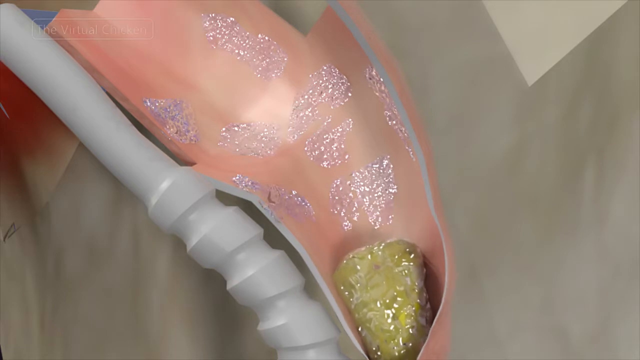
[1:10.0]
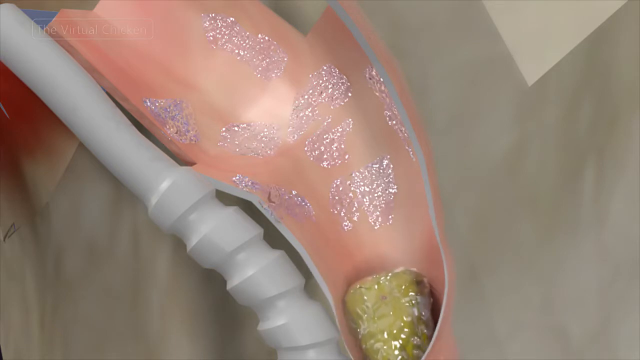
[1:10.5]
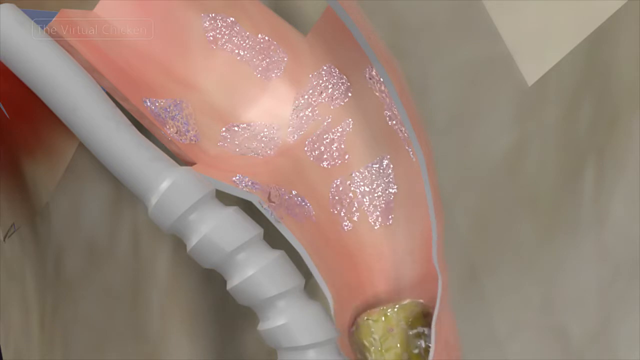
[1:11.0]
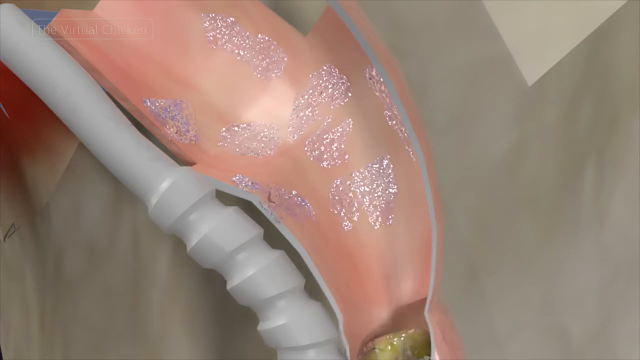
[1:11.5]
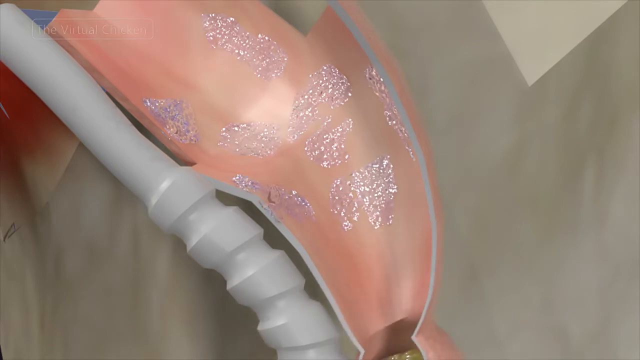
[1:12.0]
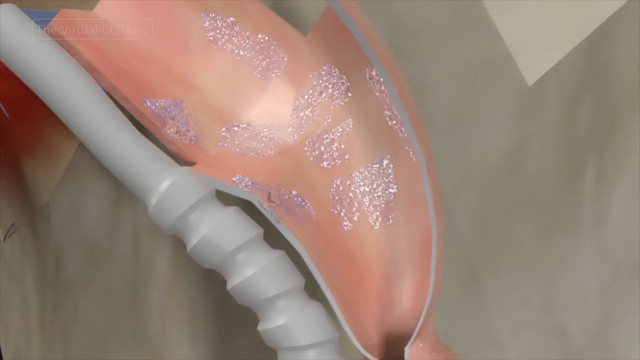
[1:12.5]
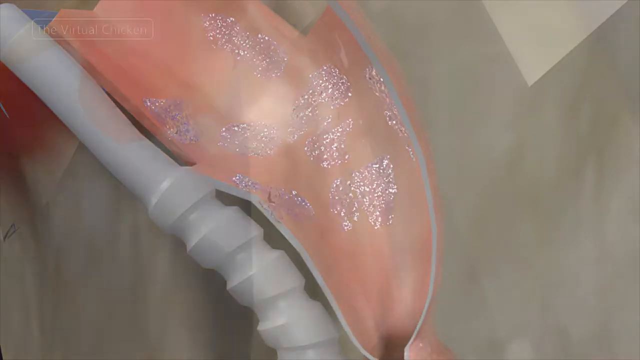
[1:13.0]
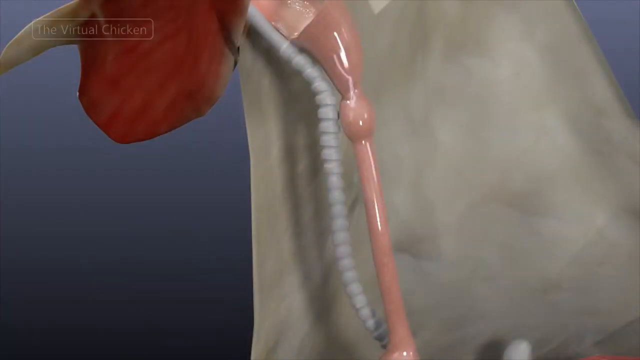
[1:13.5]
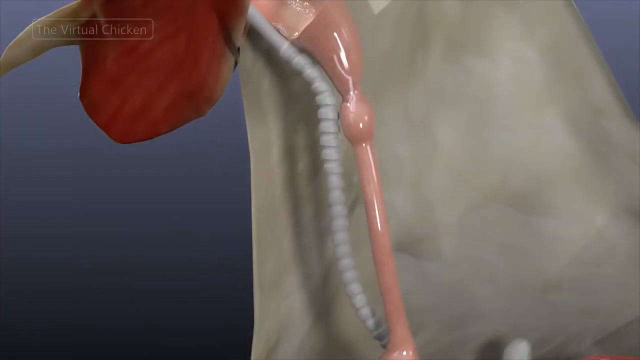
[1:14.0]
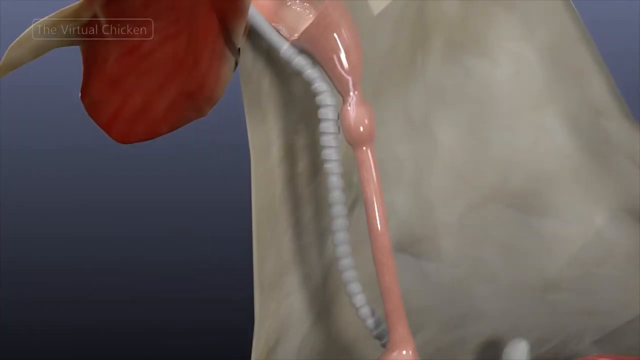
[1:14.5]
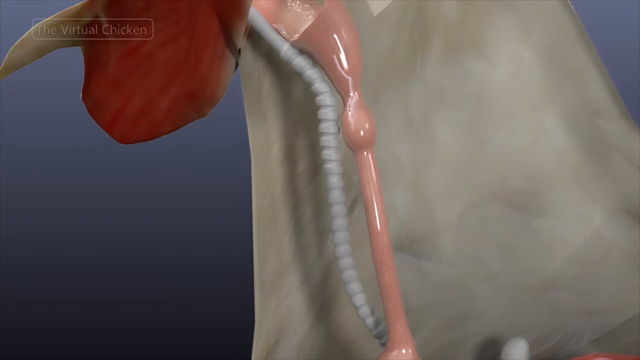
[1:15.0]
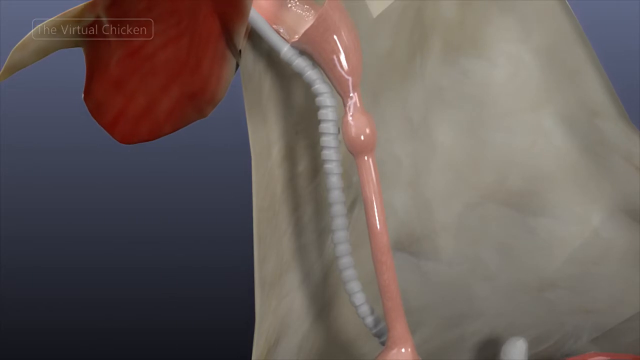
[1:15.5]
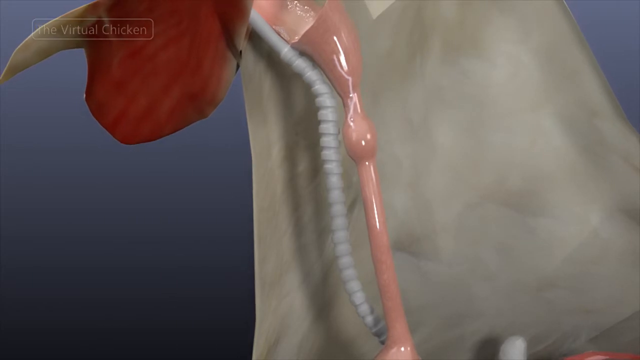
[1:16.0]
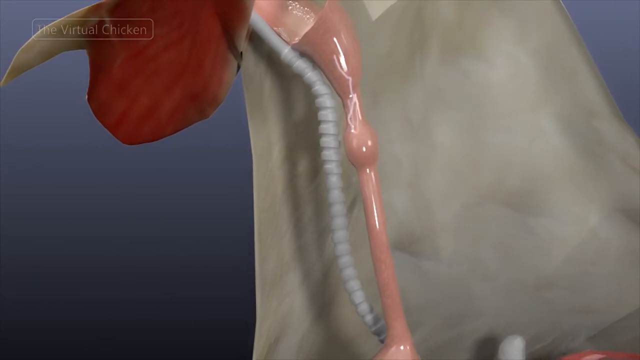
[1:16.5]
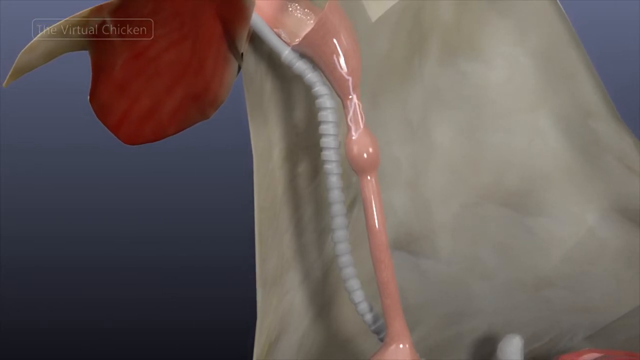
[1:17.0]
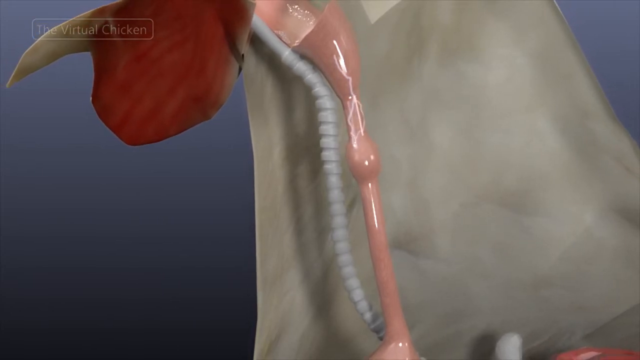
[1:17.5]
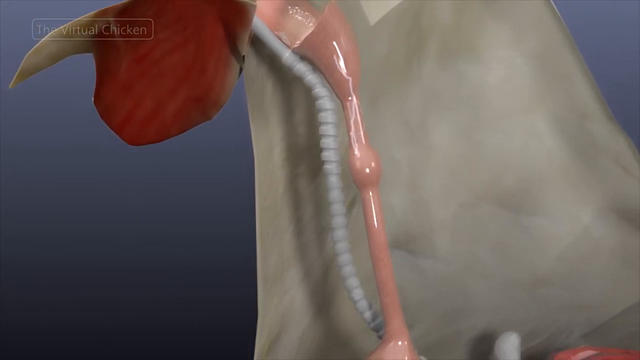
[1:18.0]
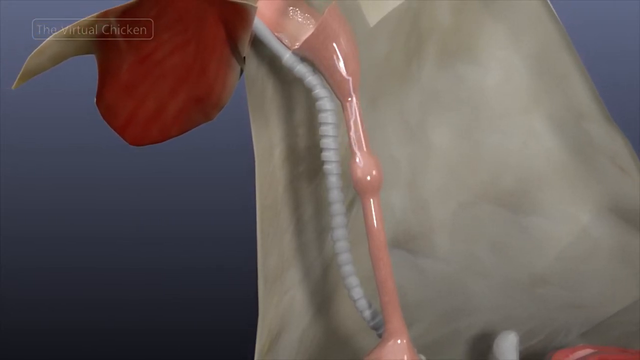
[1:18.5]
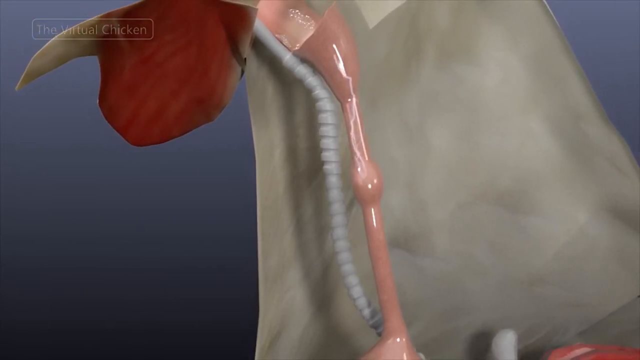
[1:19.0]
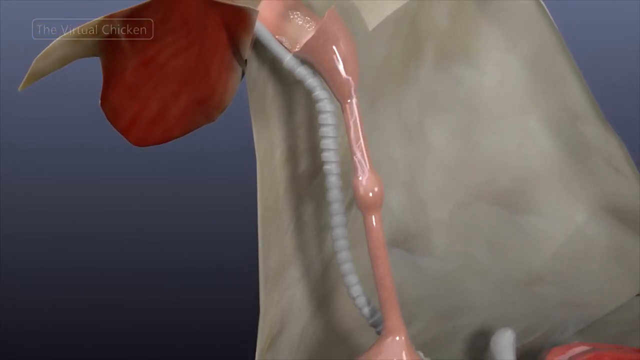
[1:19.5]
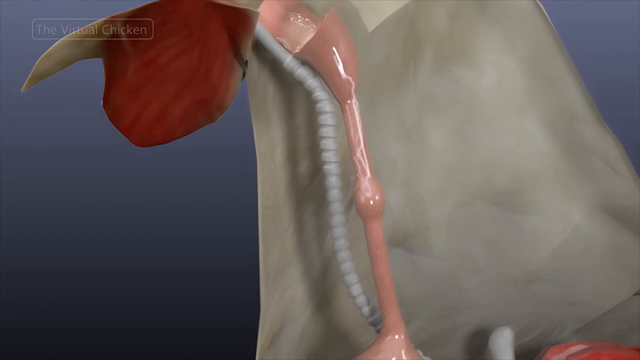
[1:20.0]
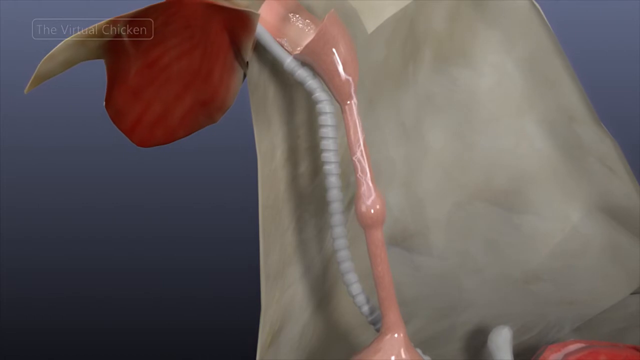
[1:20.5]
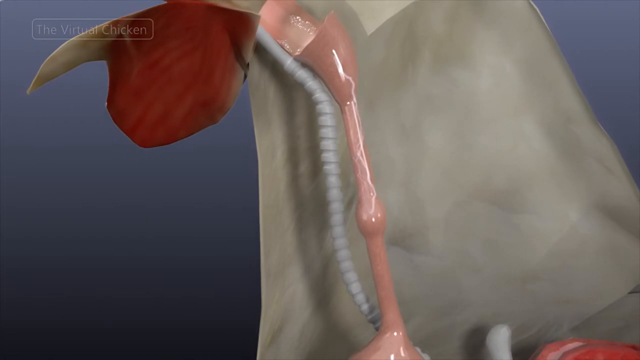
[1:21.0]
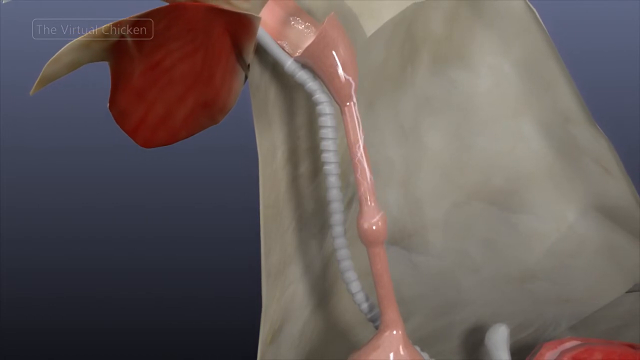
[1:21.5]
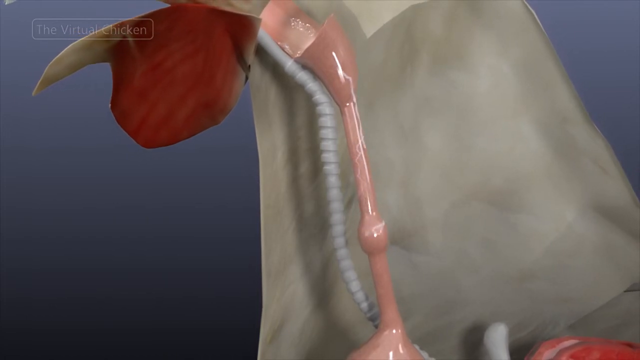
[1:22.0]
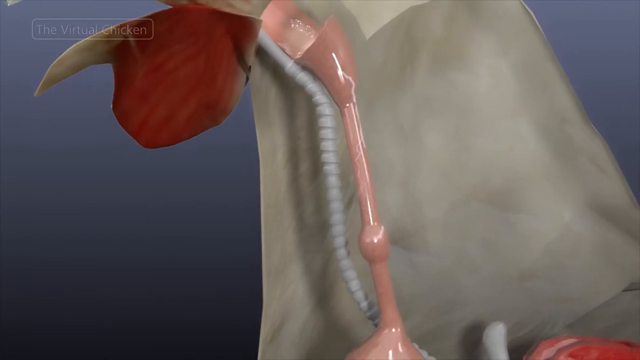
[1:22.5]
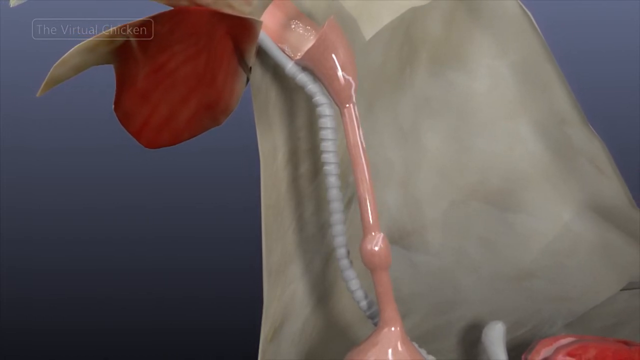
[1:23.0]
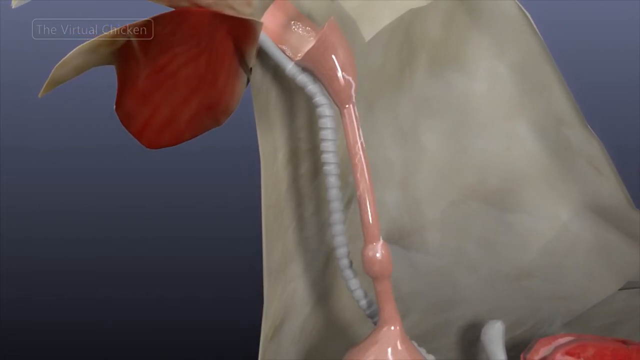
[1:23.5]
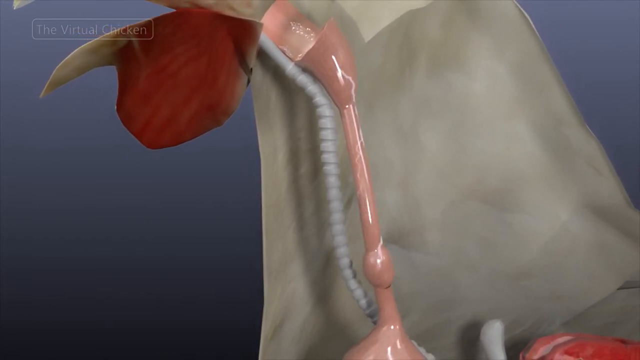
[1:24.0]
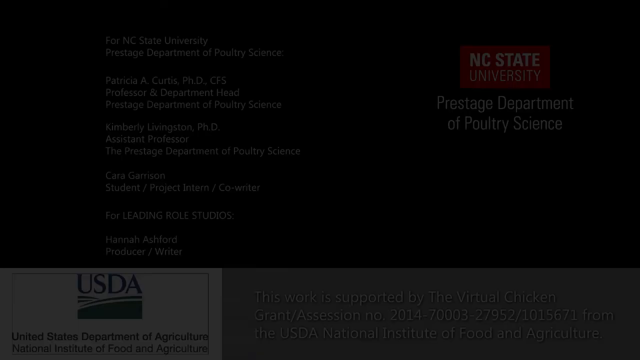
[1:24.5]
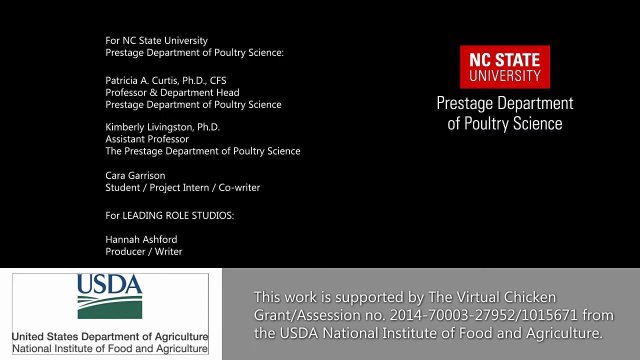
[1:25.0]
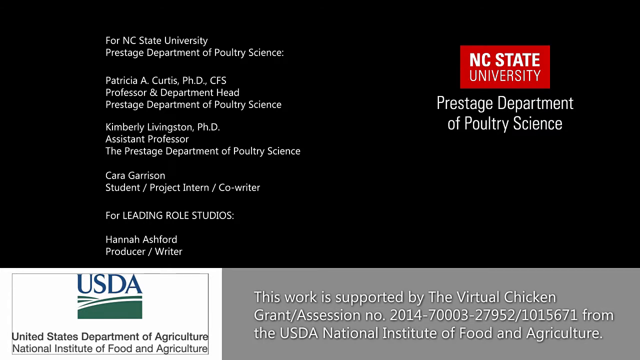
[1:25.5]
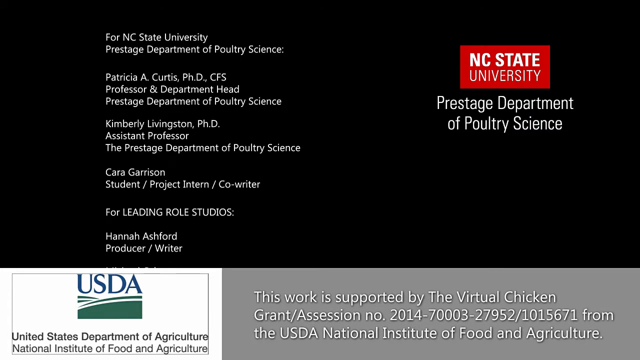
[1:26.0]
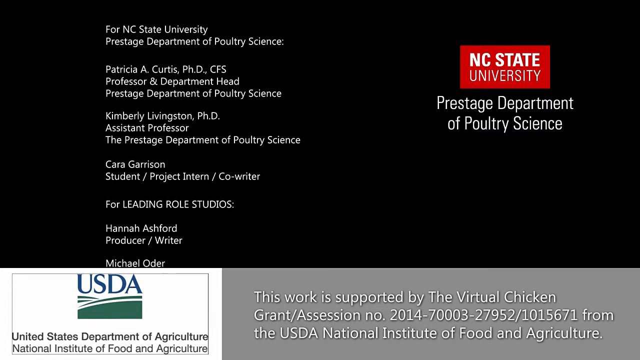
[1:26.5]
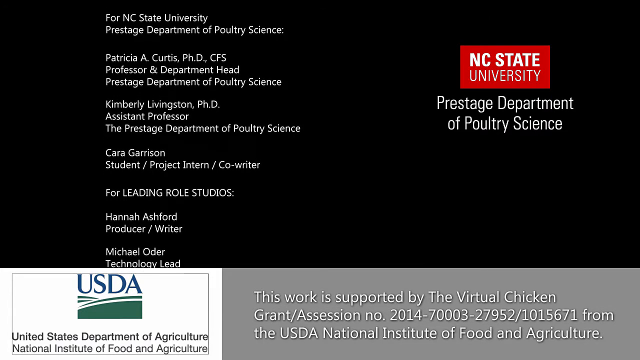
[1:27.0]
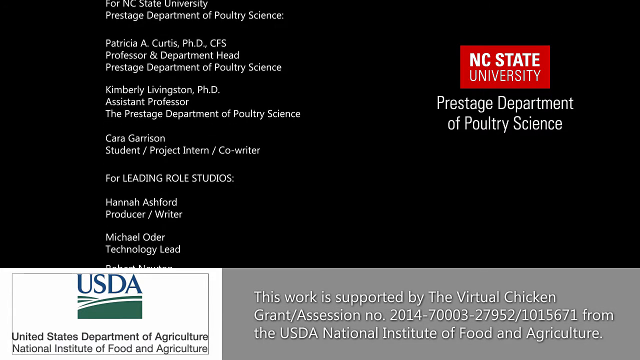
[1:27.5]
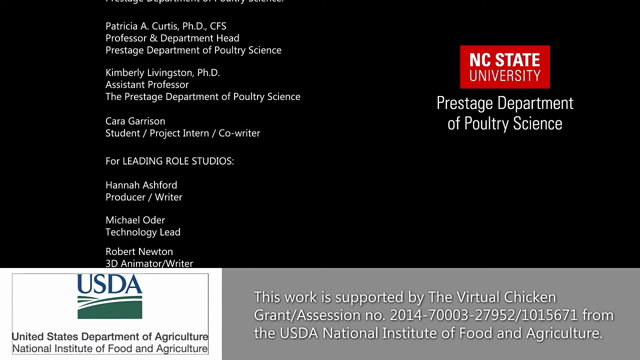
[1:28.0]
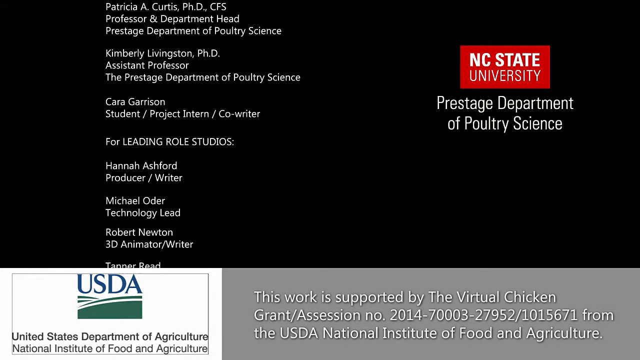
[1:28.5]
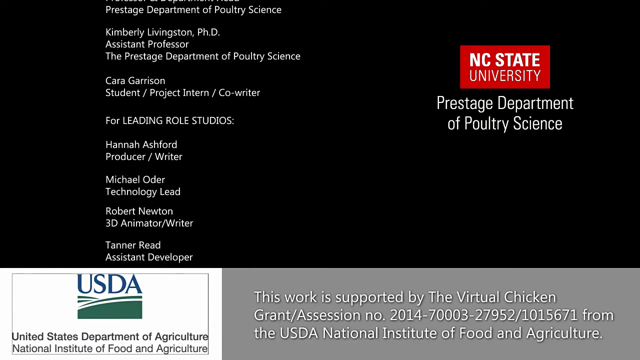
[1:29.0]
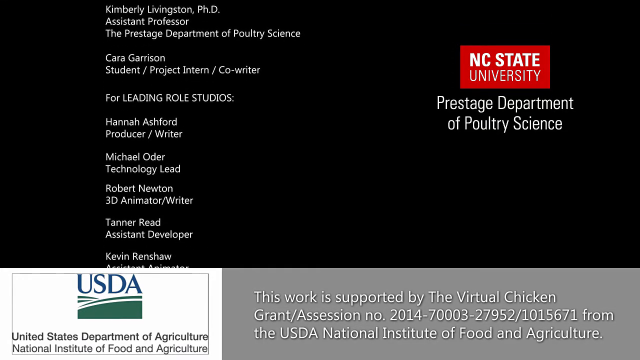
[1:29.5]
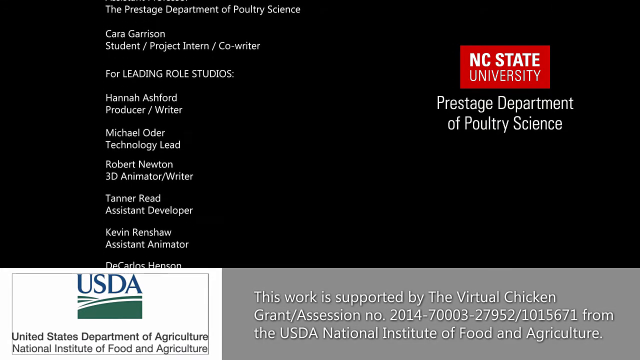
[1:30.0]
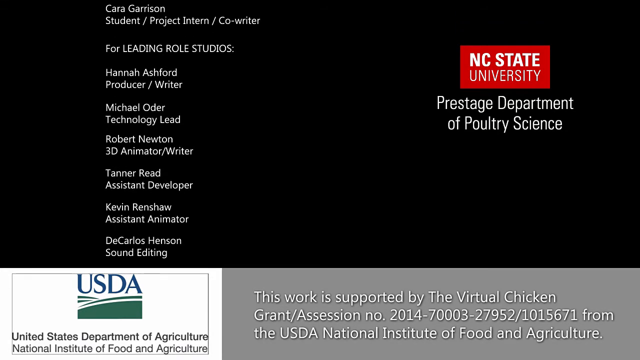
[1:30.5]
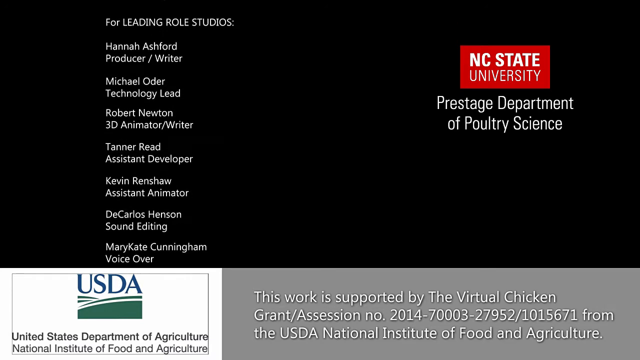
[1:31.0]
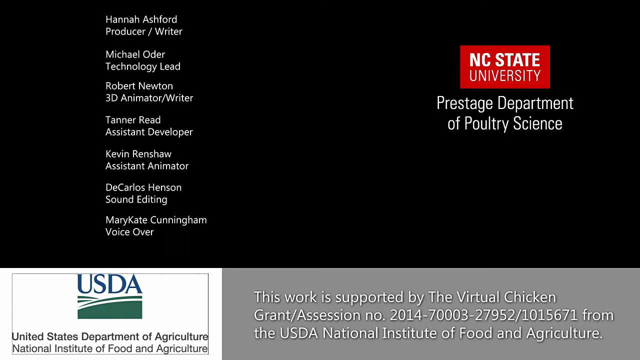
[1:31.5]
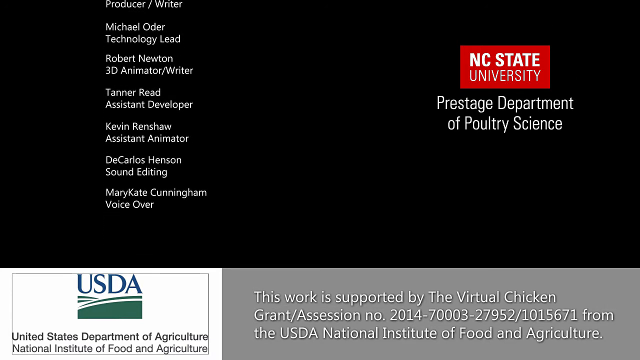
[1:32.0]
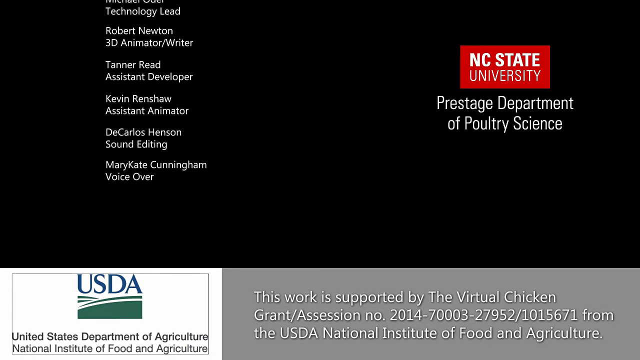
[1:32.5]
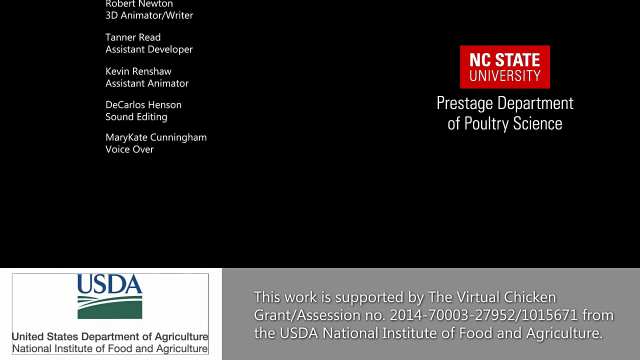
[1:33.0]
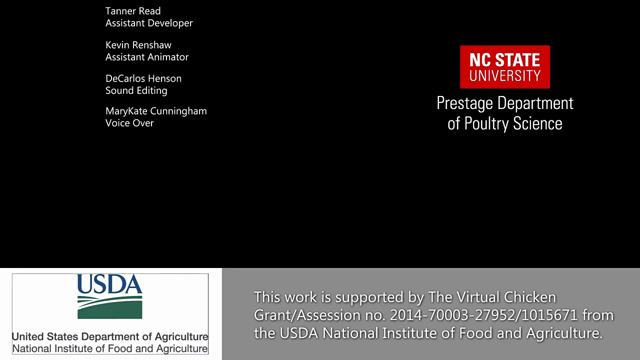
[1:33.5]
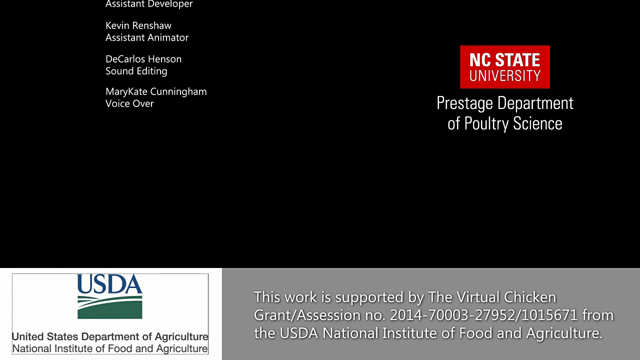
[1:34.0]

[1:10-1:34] A chicken's head is shown with its mouth open and something inside the mouth. The item gets stuck in the chicken's neck and is pushed down through the throat, but it looks bigger than the chicken's throat. As it goes down, it causes cracks in the throat, and some of the muscles are breaking.